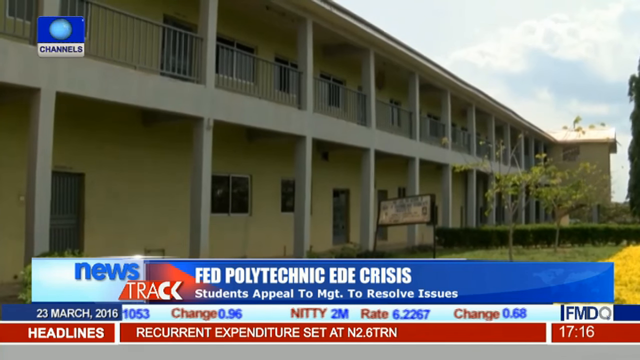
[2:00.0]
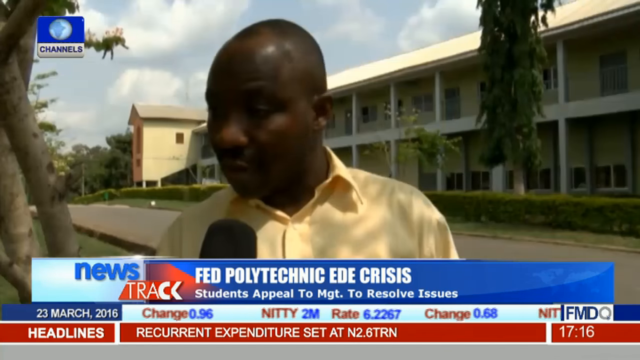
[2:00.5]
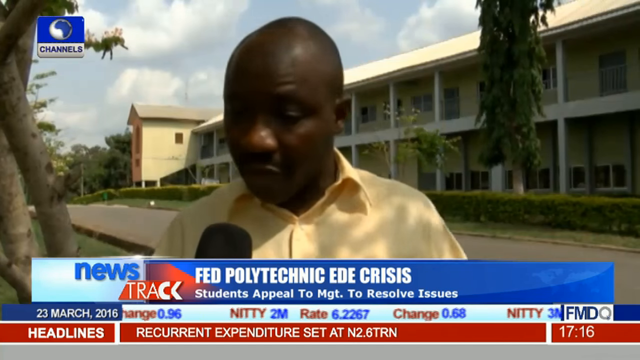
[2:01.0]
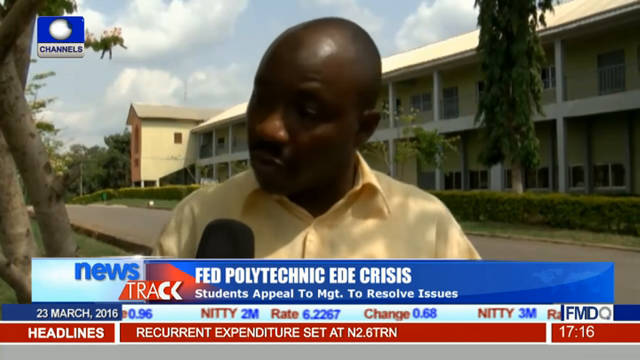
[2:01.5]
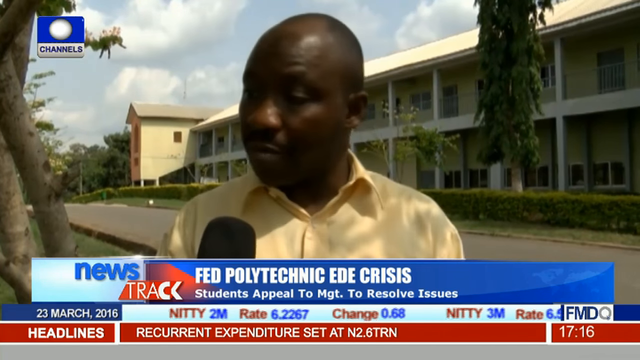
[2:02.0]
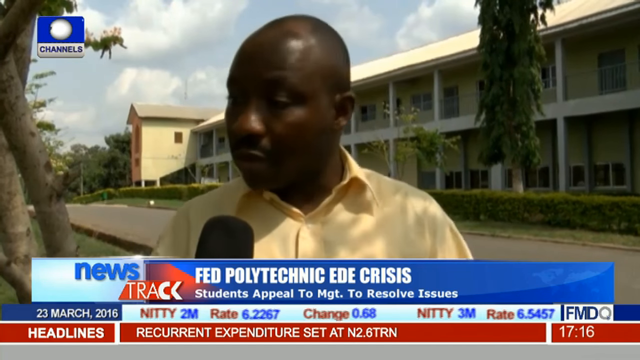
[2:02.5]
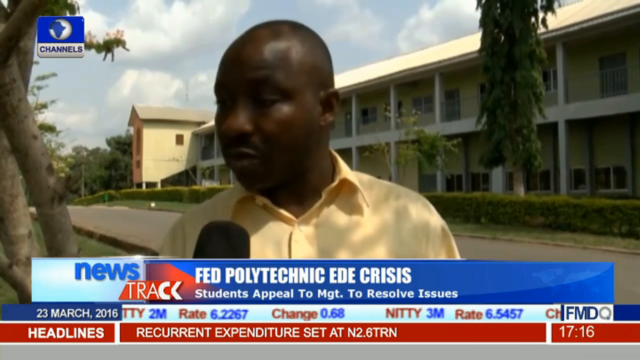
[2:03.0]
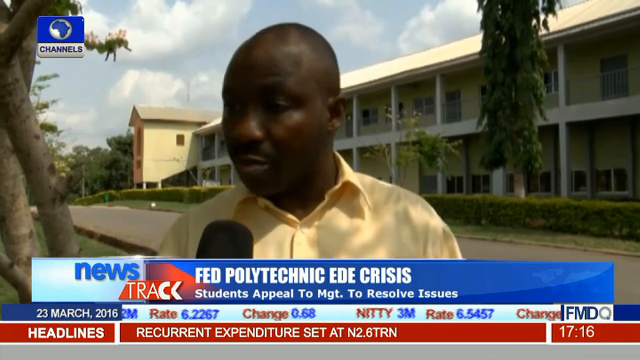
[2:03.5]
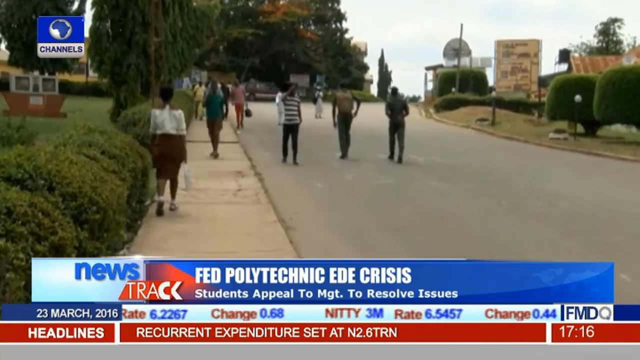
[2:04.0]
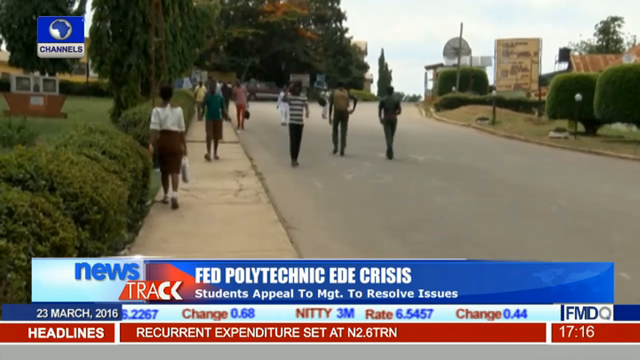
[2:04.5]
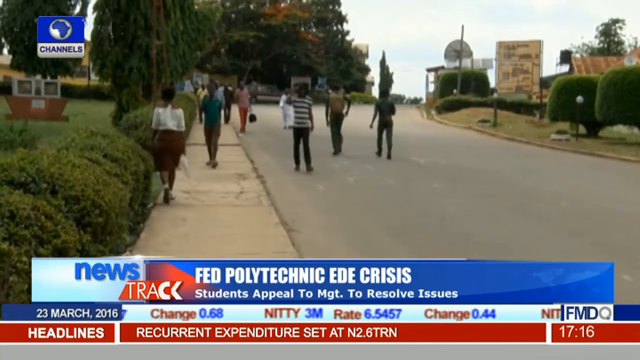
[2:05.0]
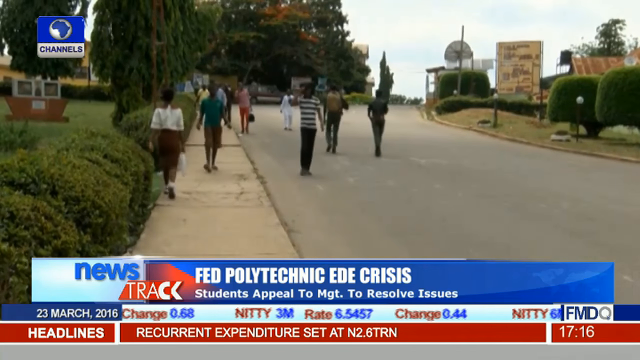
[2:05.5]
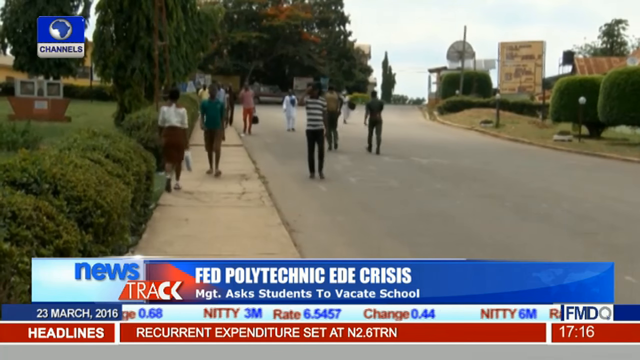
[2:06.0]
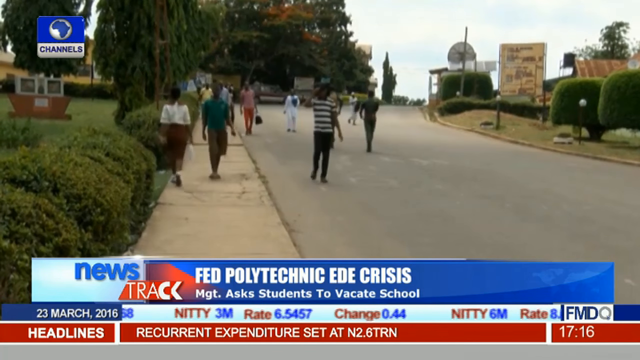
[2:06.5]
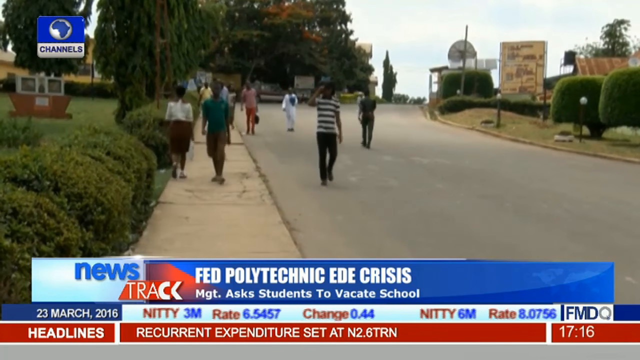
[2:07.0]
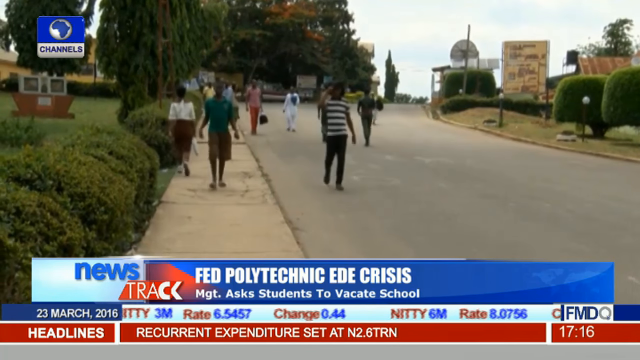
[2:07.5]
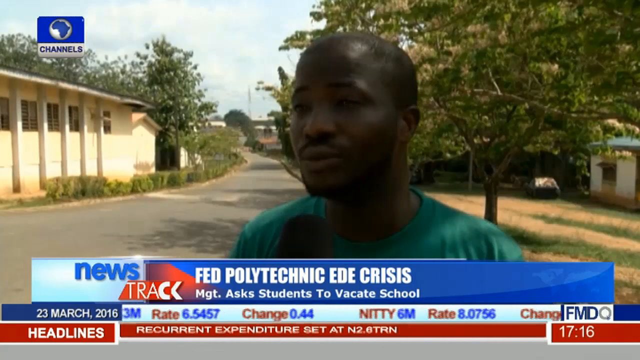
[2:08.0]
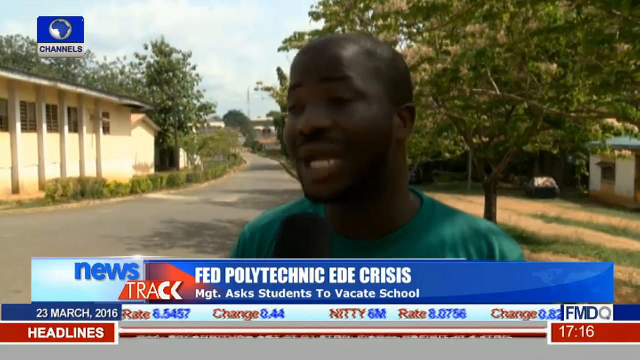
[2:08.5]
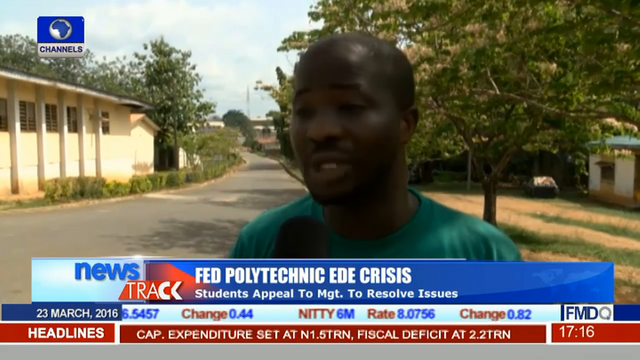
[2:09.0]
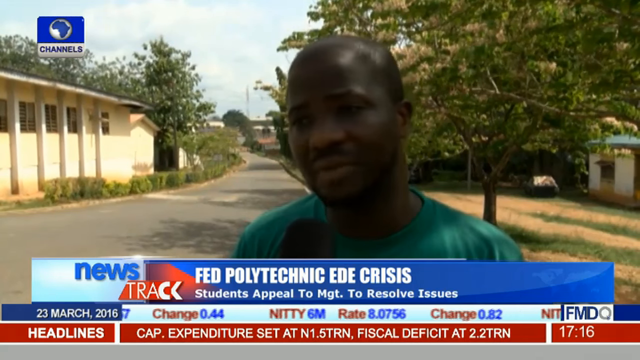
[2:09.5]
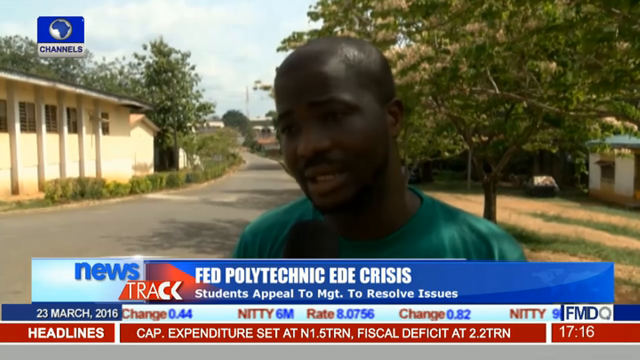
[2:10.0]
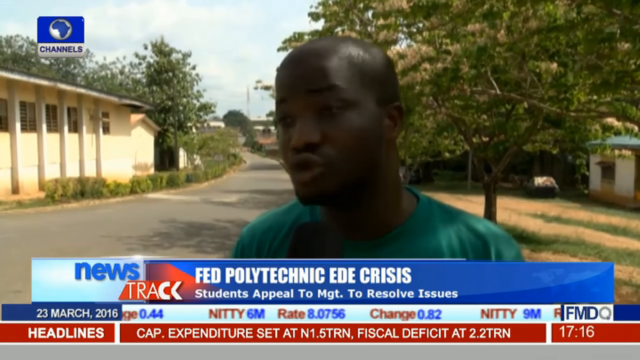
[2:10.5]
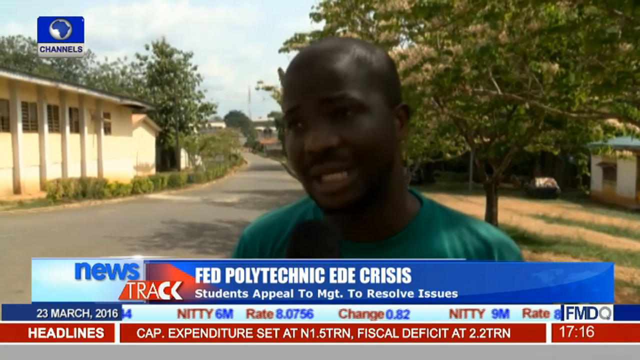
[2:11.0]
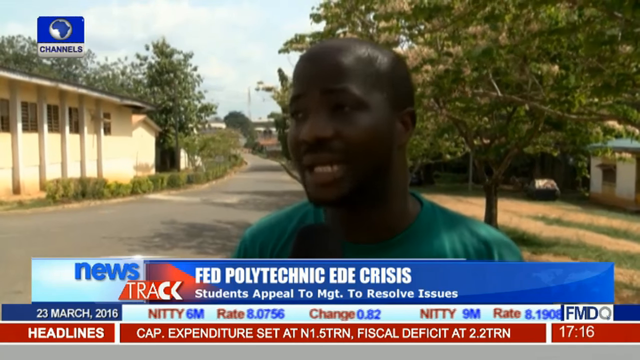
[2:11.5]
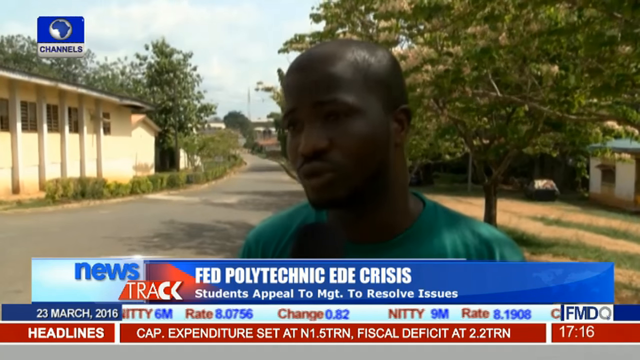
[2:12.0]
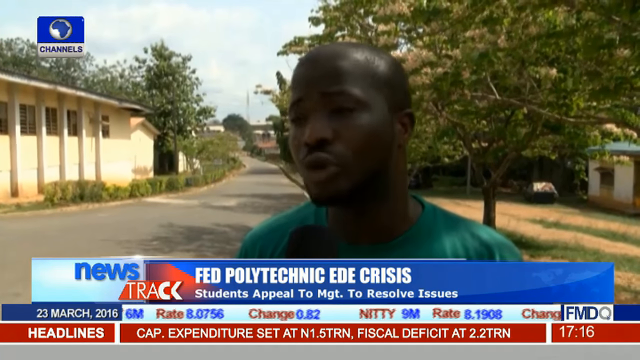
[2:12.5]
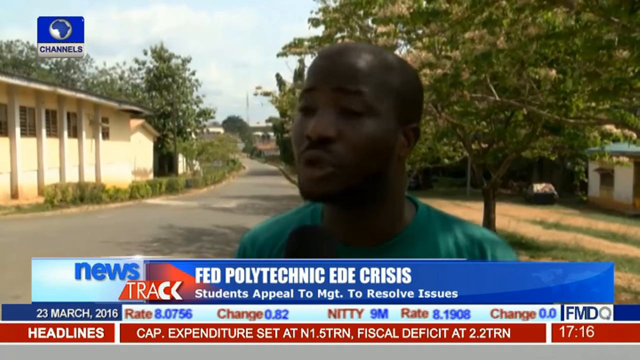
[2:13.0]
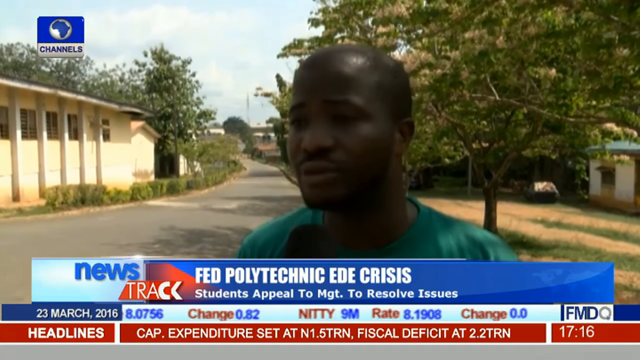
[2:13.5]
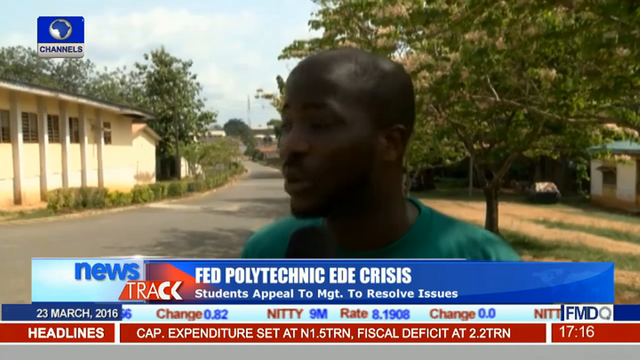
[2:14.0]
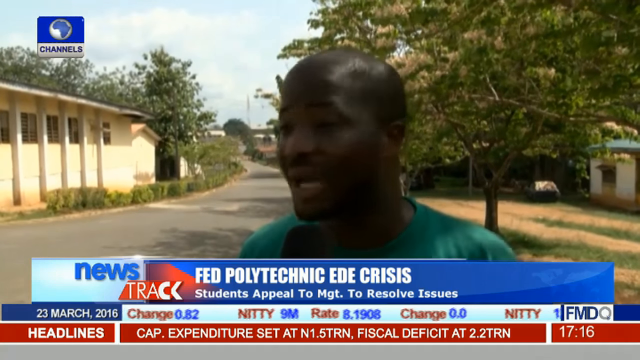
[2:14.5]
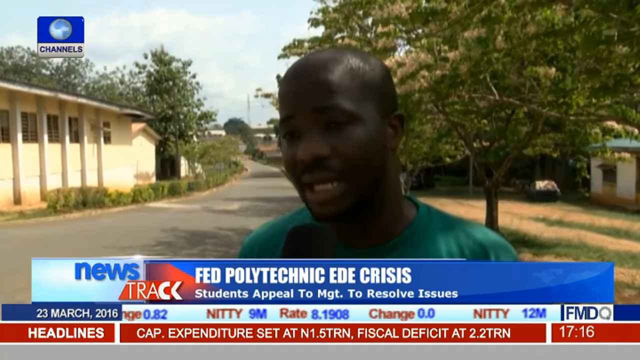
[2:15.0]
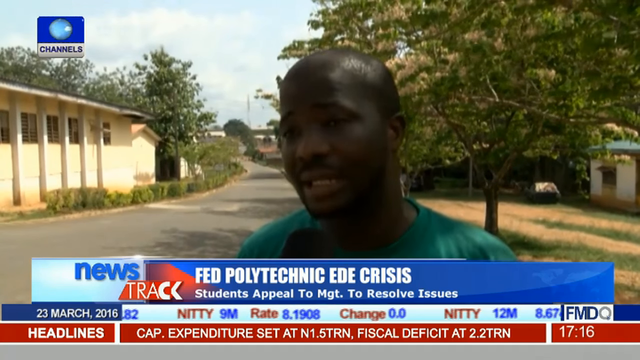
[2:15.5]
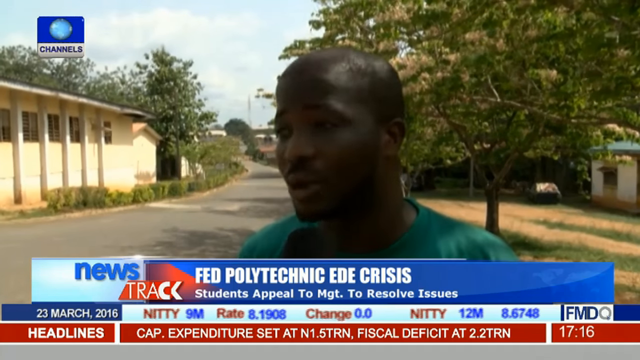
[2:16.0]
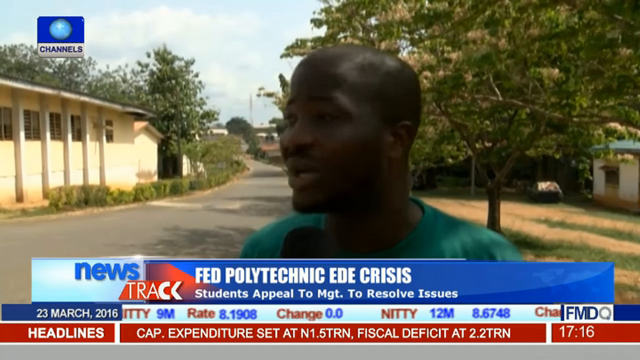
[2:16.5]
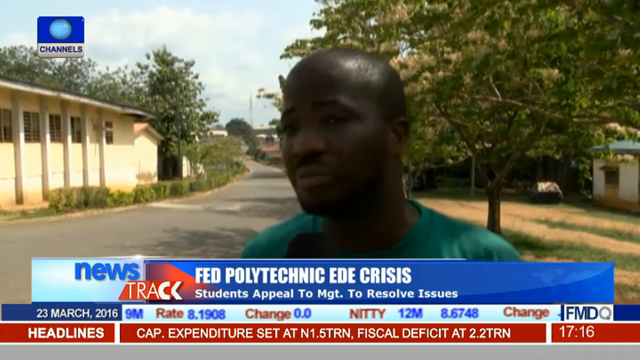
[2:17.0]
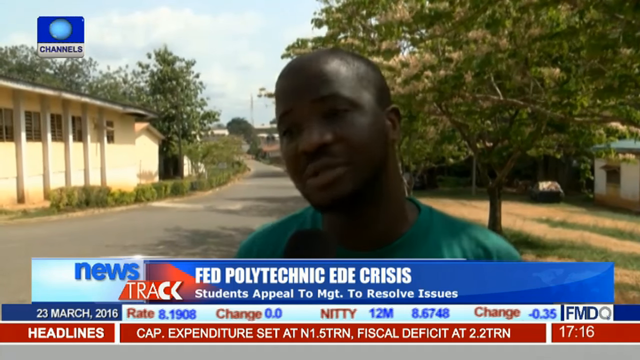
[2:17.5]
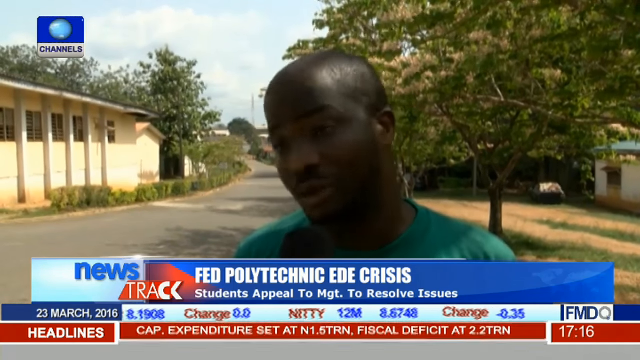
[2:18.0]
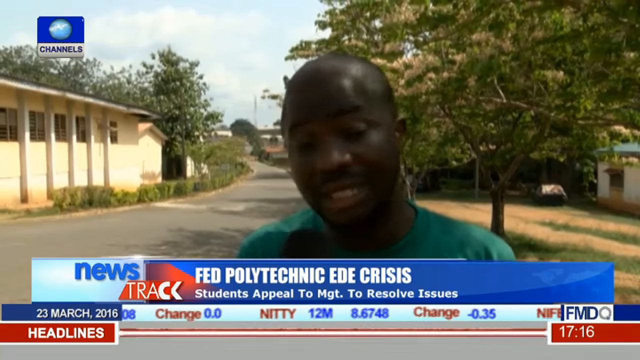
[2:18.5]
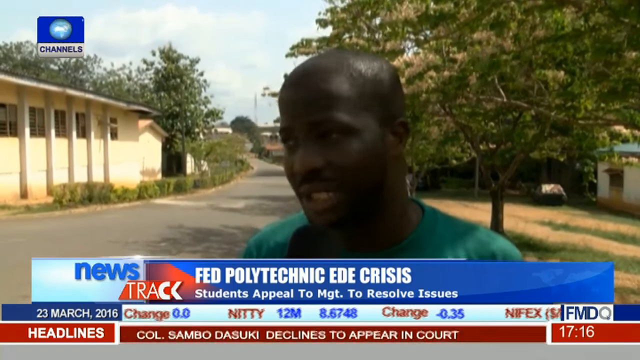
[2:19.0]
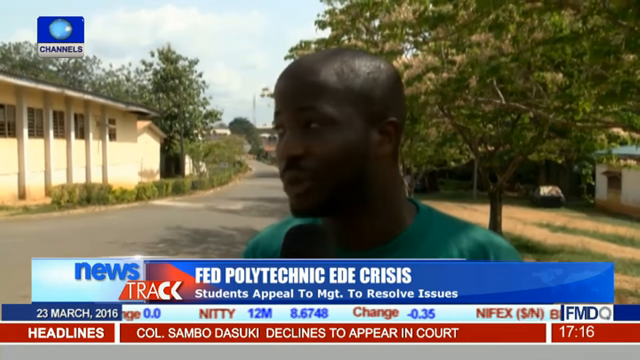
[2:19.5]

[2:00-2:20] The yellow building with many outside rooms and windows appears first. The video then goes right into an interview with a black man in a yellow shirt standing in front of a yellow building next to a nicely paved road, with trees surrounding the building. He speaks to the reporter, at times shrugging his shoulders and moving his hands around. The shot changes to what looks like students casually walking up and down the road, then to another interview with a man in a dark green t-shirt with a green tree behind him. He looks like he is trying to get the reporter to understand what is going on and appears very comfortable talking to the reporter.